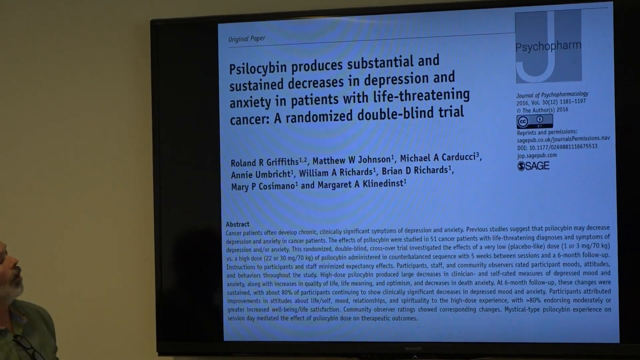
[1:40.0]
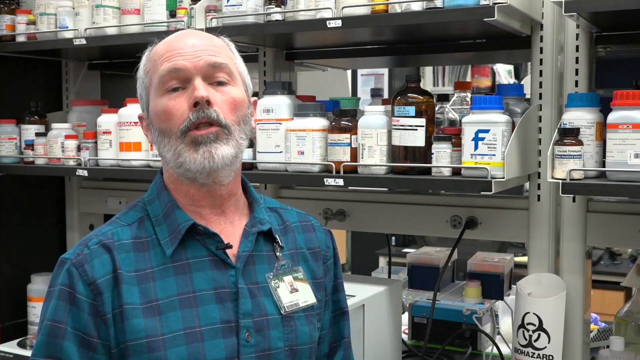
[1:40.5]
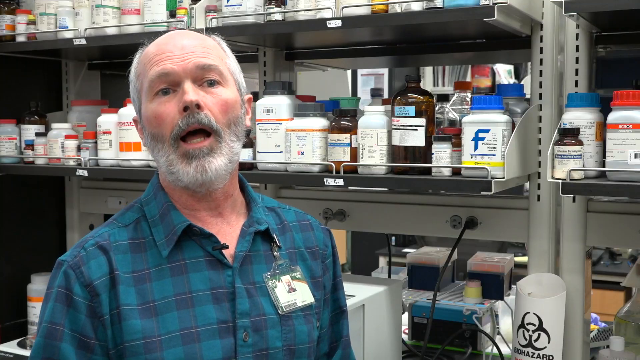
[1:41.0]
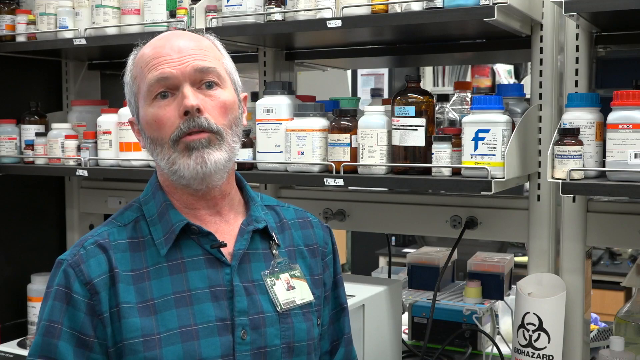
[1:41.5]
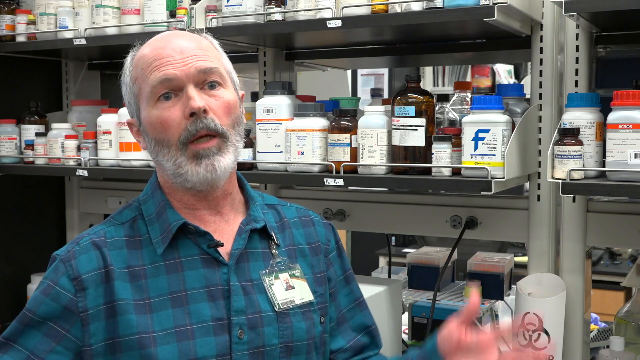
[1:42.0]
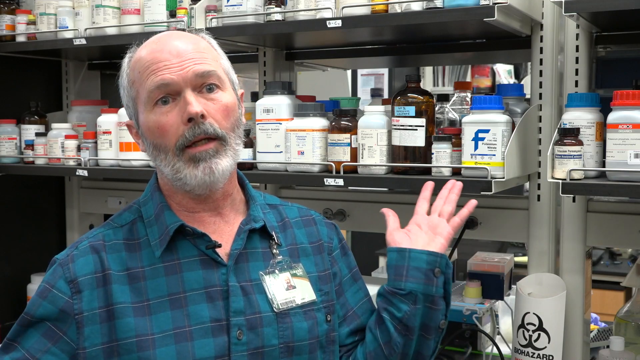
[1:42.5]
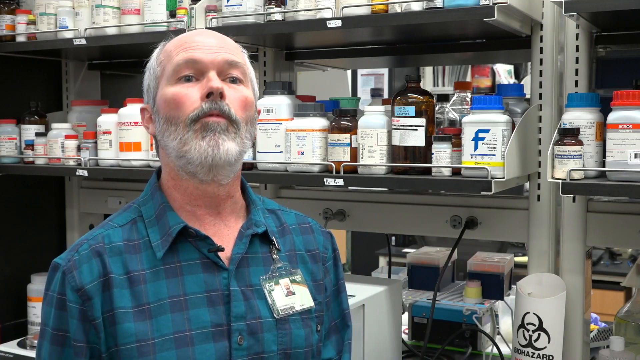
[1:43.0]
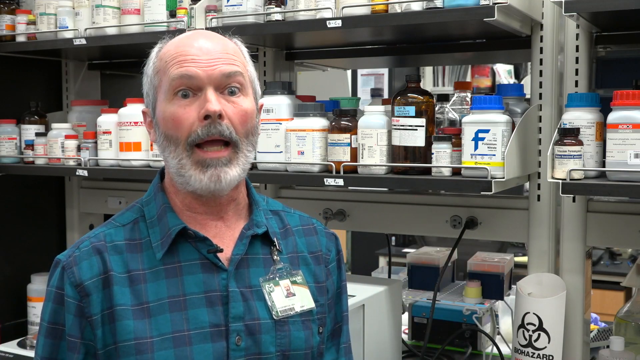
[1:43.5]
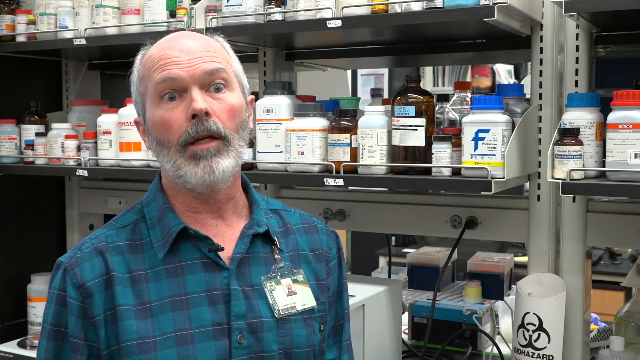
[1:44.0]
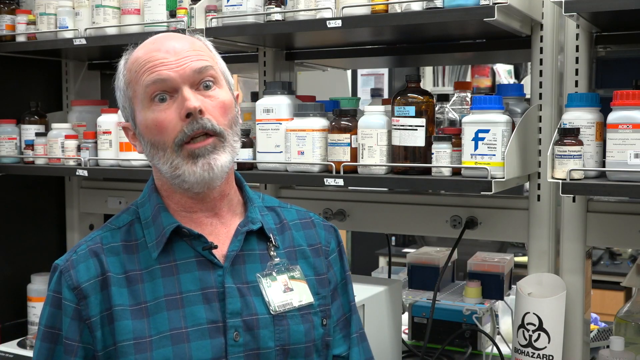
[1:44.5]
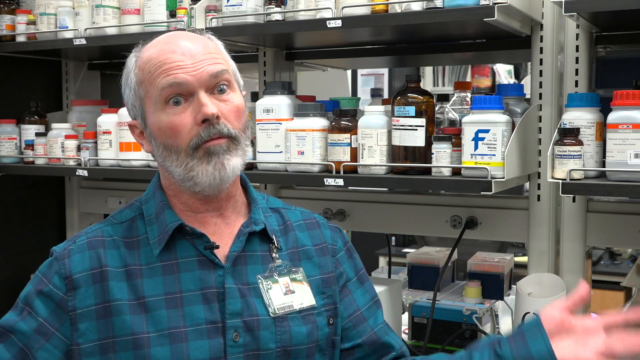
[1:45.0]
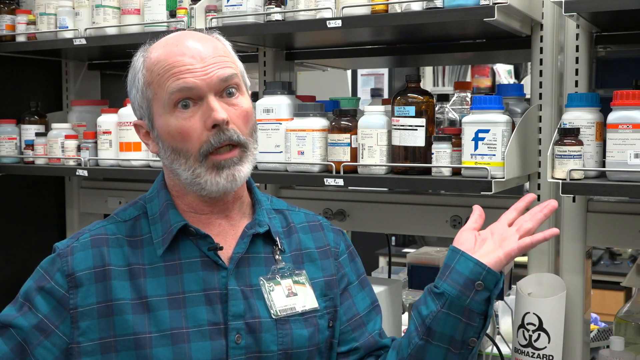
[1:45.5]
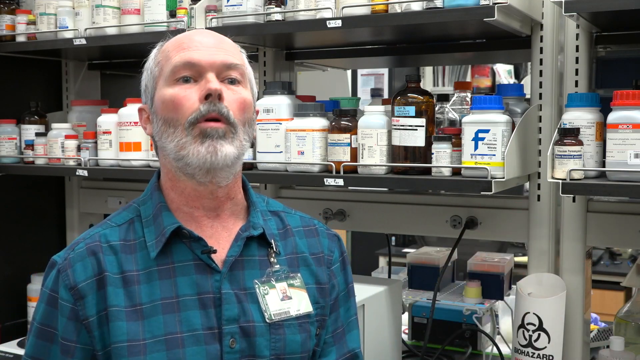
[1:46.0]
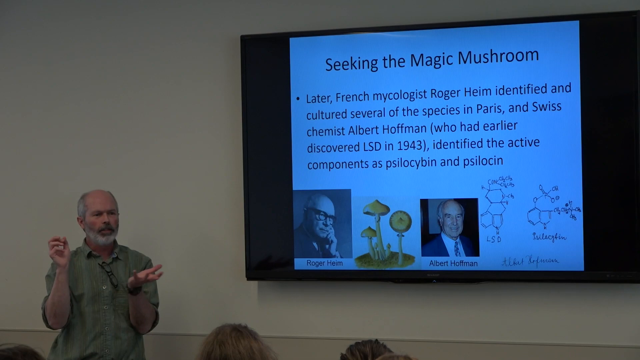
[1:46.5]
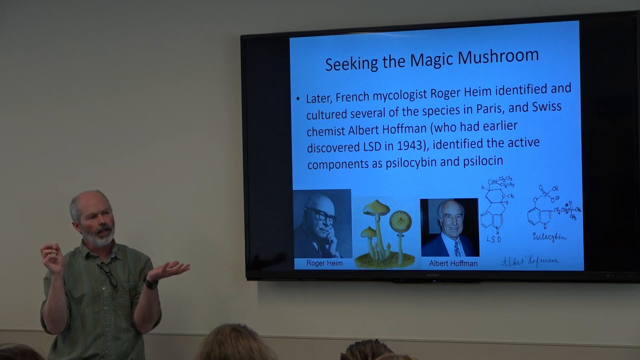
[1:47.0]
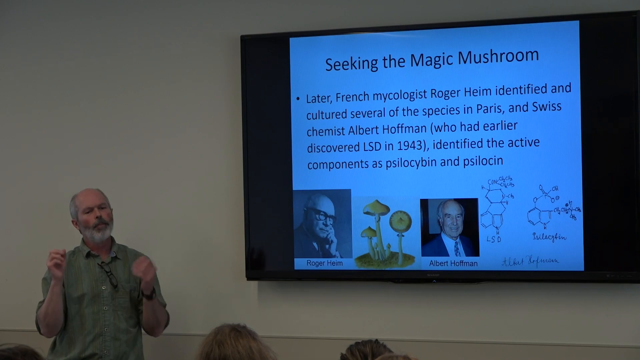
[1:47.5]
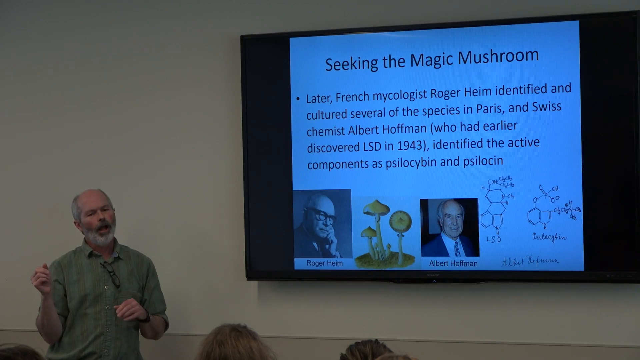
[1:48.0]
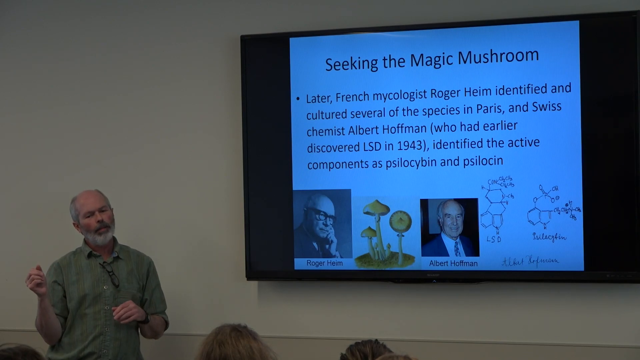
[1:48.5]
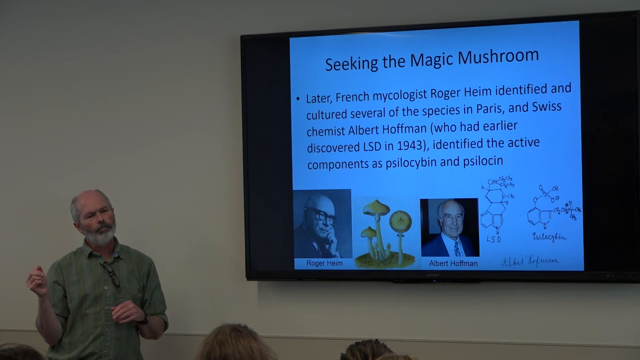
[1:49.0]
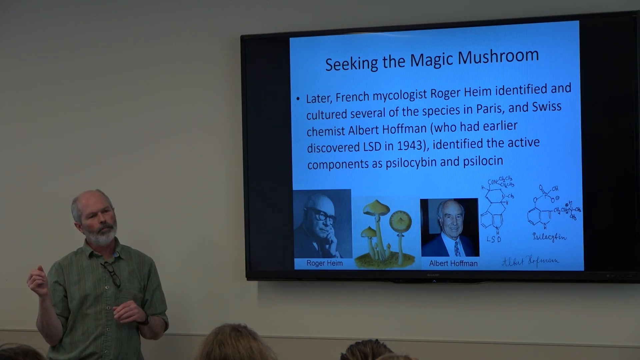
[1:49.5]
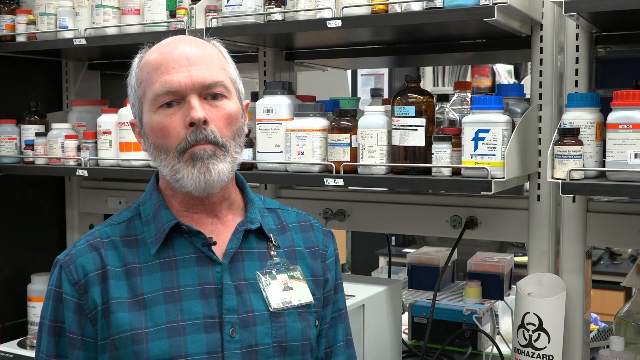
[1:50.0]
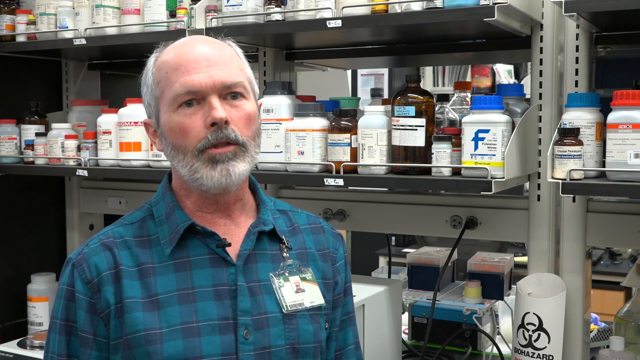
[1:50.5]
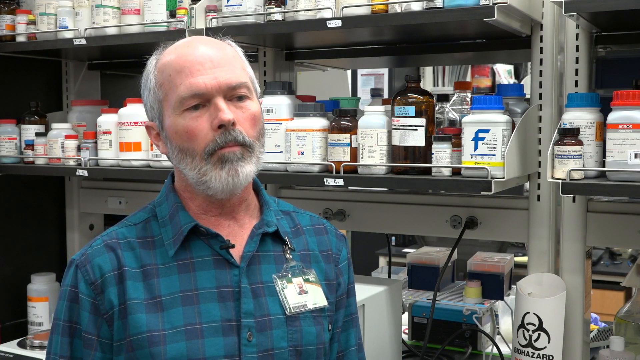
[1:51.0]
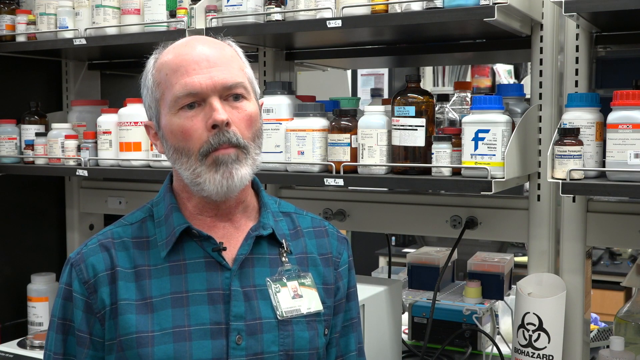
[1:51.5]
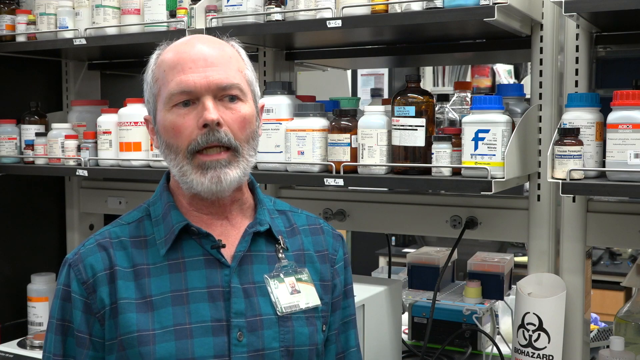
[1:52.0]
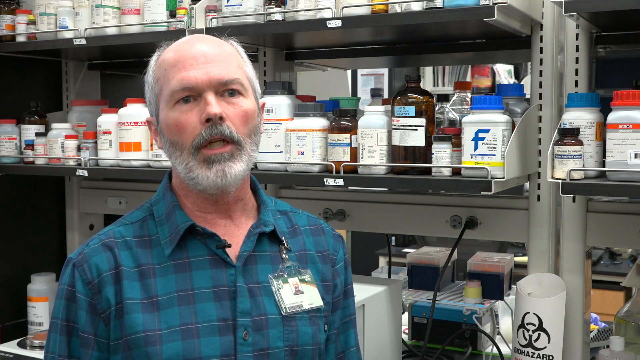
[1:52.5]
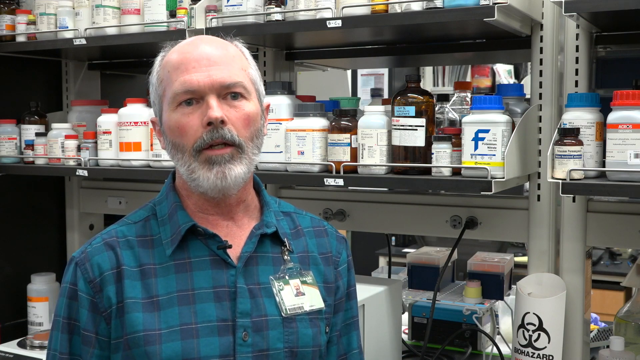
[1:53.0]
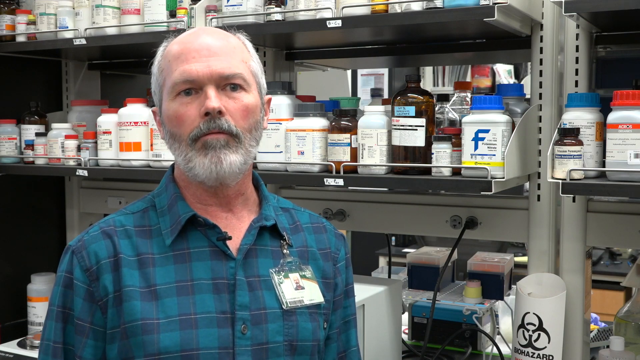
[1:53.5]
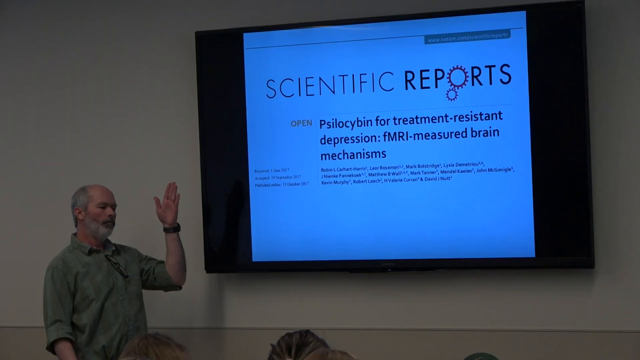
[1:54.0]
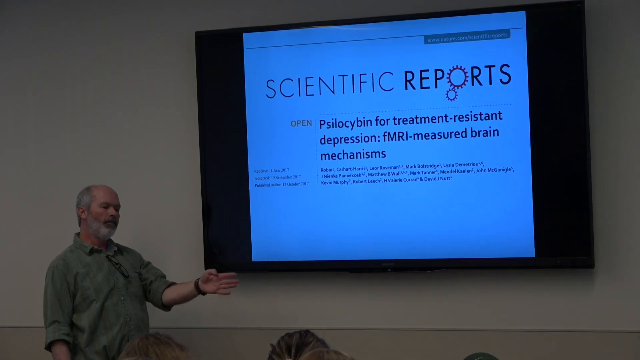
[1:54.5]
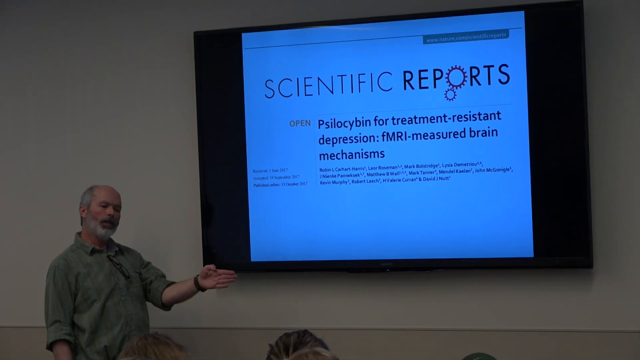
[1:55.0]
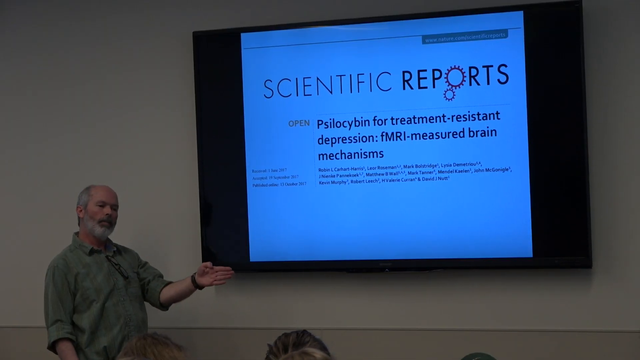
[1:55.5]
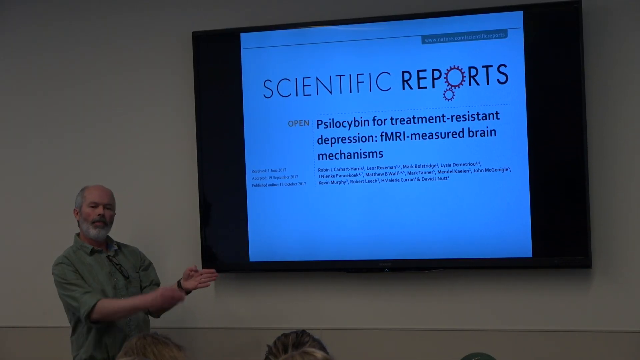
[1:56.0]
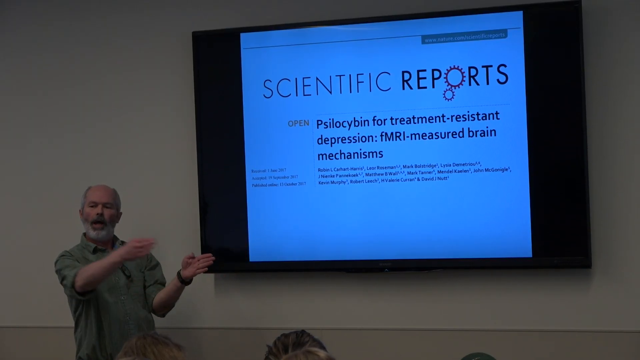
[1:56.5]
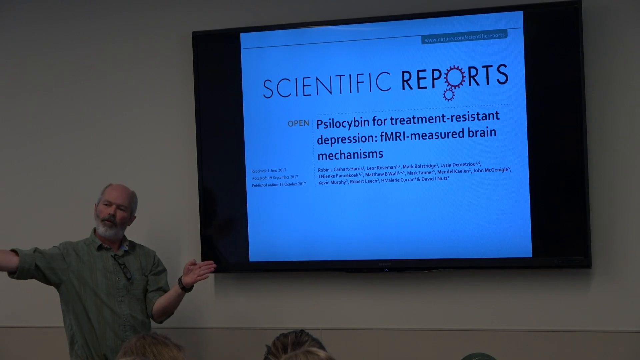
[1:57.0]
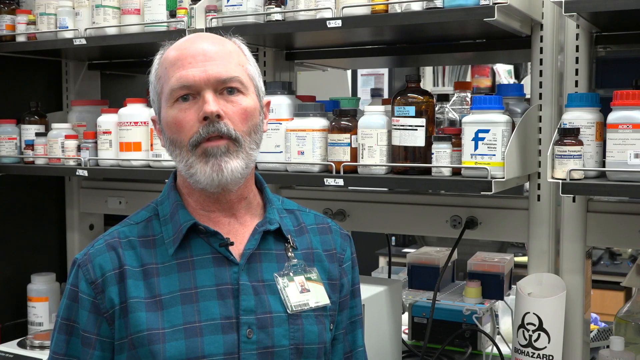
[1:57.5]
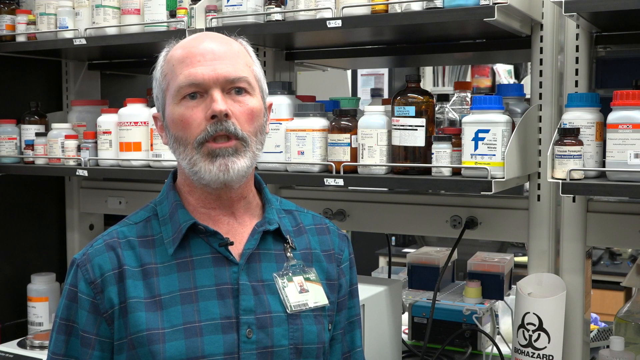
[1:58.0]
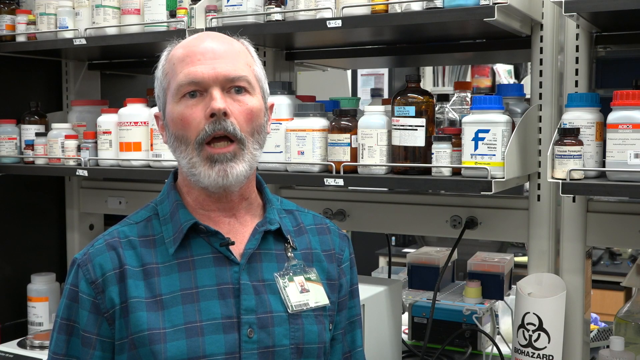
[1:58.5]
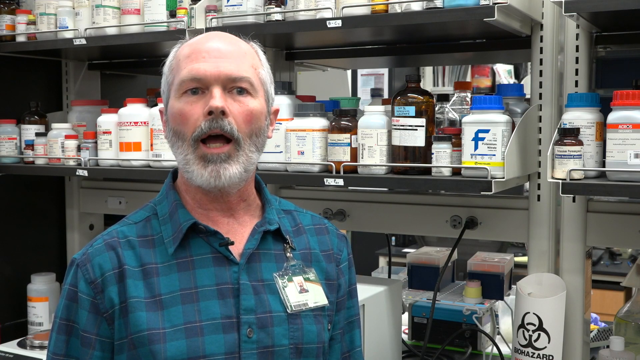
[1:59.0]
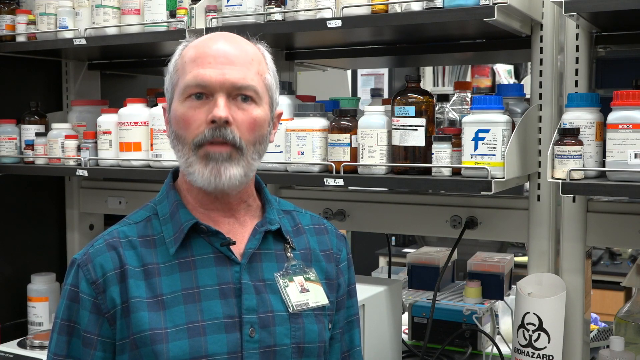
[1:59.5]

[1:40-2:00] The presentation screen reads "psilocybin produces substantial and sustained decreases in depression and anxiety in patients with life-threatening cancer a randomized double-blind trial", followed by a list of the doctors and authors. The video returns to Dr. Ken Kassenbrock, CSU special assistant professor of biology, who appears to be in his lab as he speaks. The next screen says "seeking the magic mushroom" and describes how two of the cultured species were identified. The video cuts back to him in the lab, then to the presentation, where the screen says "scientific reports" and then "psilocybin for treatment resistant depression fMRI measured brain mechanisms".